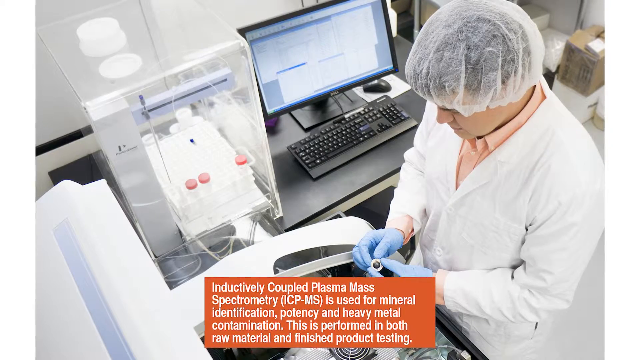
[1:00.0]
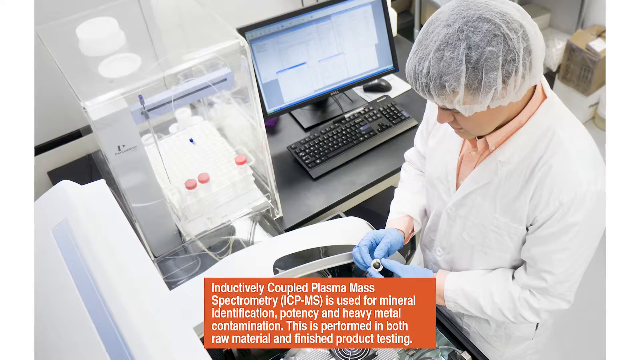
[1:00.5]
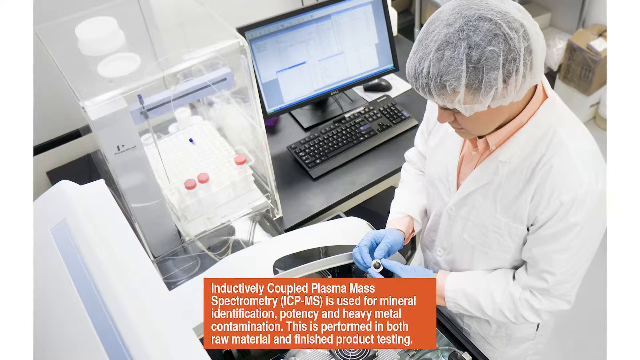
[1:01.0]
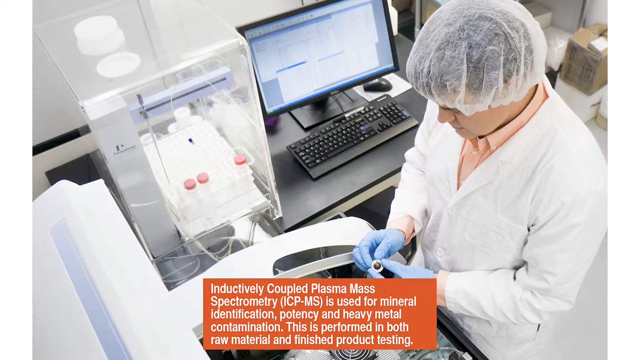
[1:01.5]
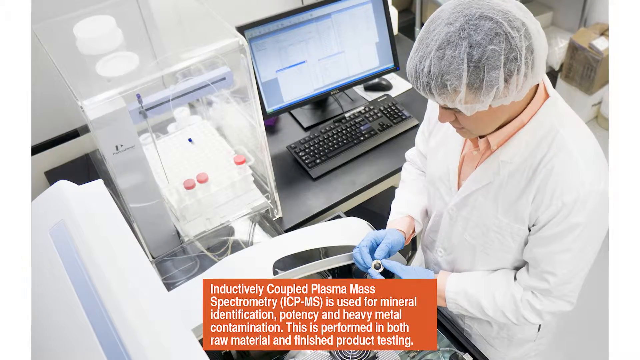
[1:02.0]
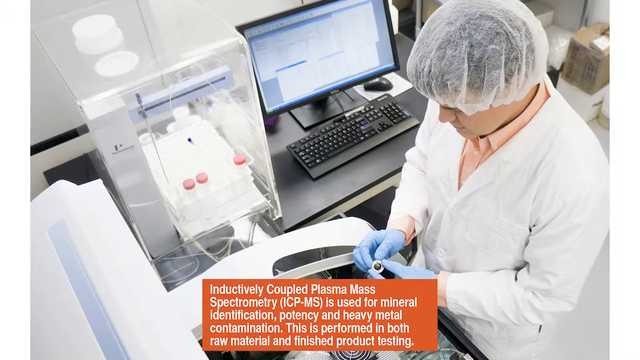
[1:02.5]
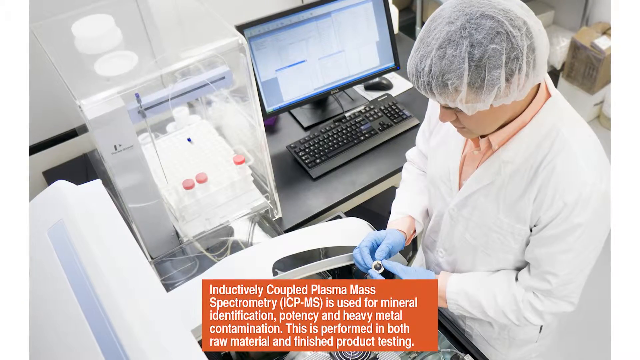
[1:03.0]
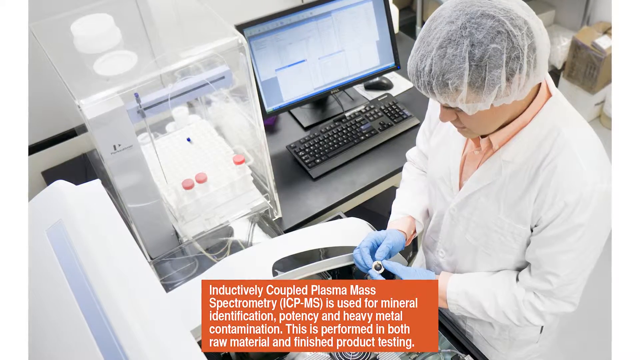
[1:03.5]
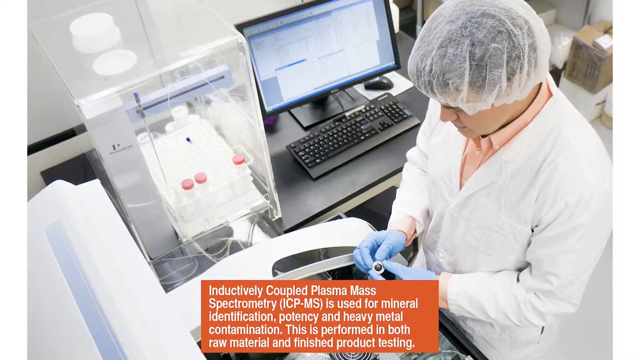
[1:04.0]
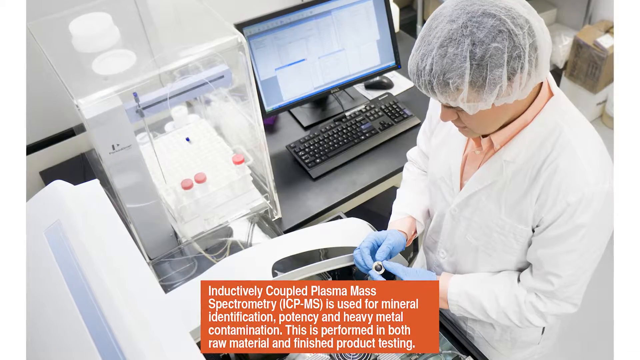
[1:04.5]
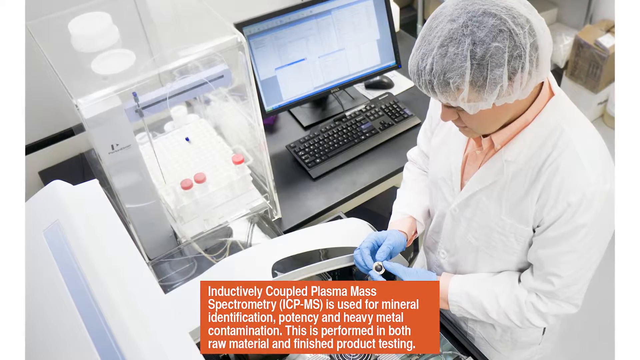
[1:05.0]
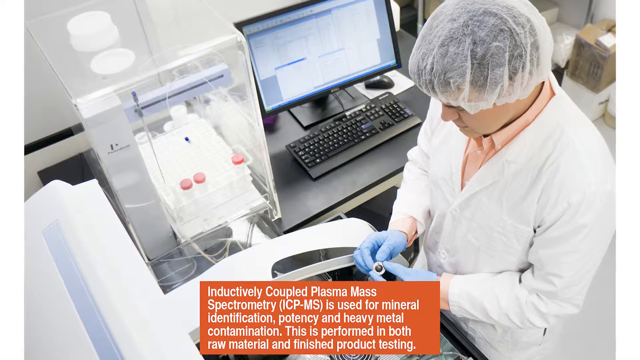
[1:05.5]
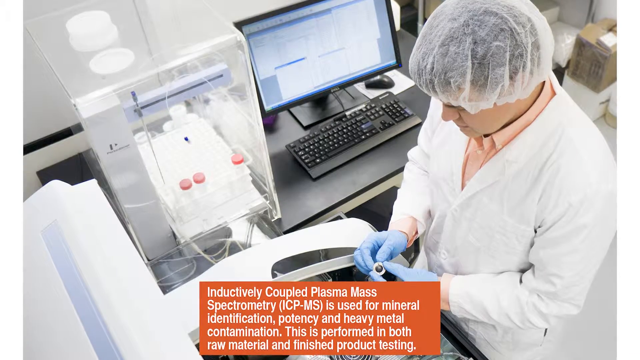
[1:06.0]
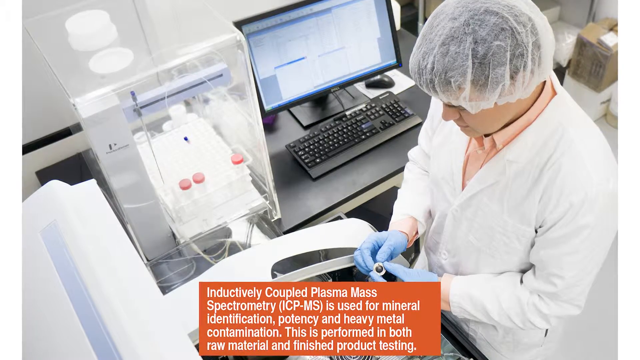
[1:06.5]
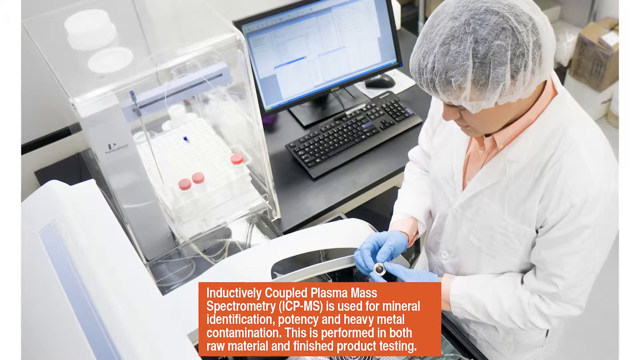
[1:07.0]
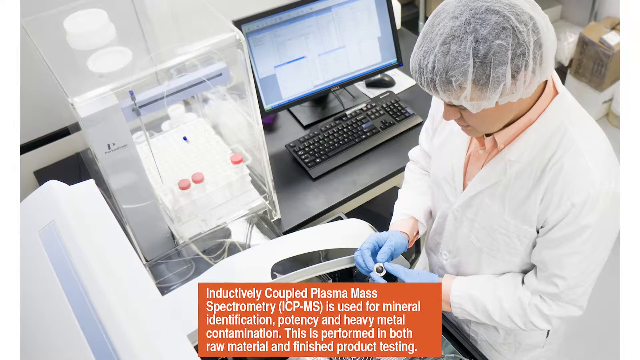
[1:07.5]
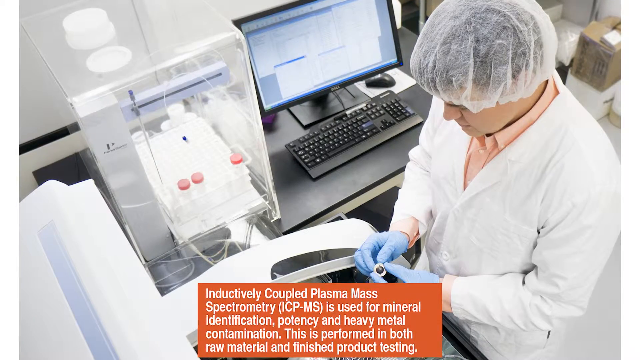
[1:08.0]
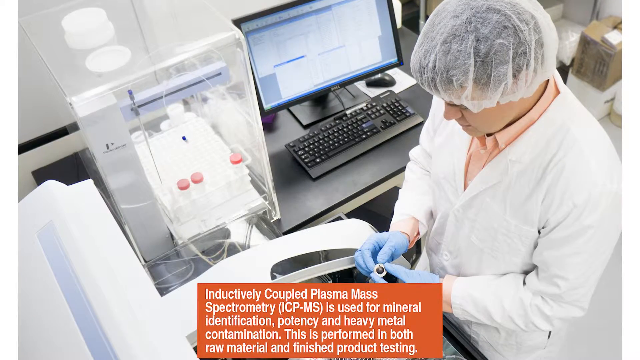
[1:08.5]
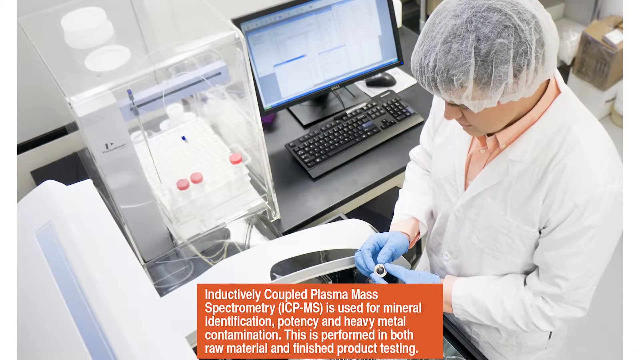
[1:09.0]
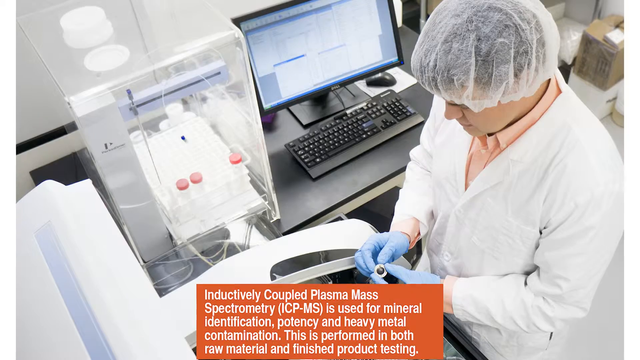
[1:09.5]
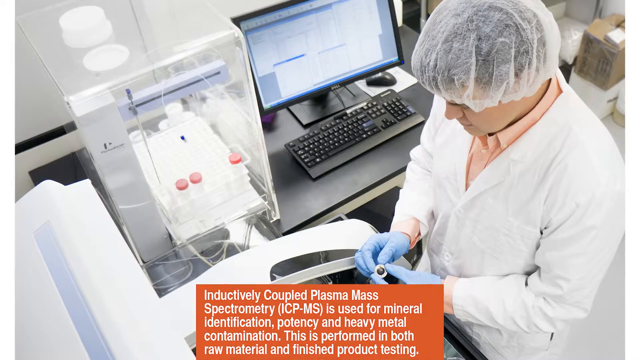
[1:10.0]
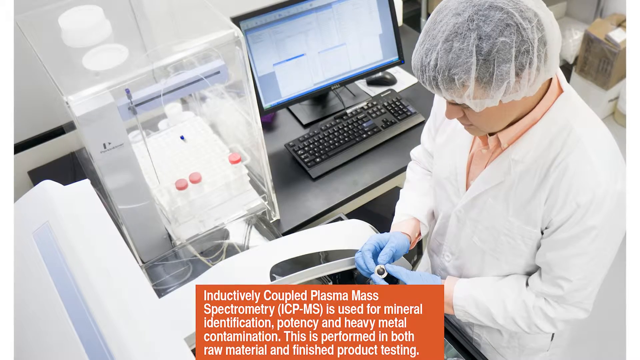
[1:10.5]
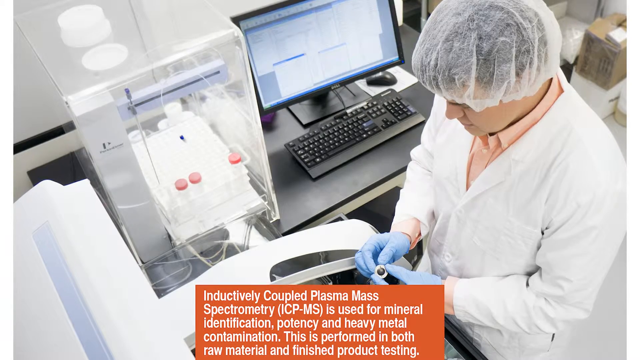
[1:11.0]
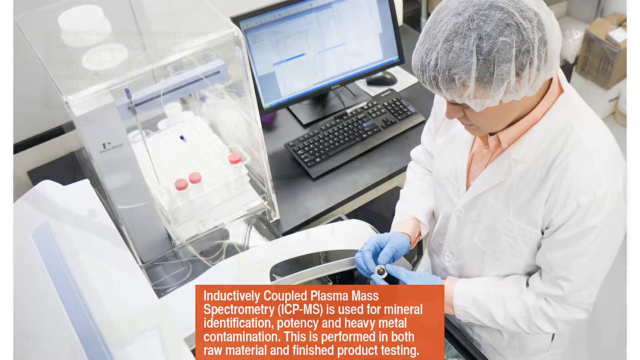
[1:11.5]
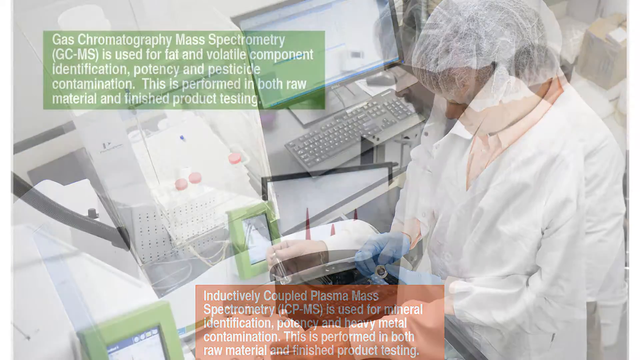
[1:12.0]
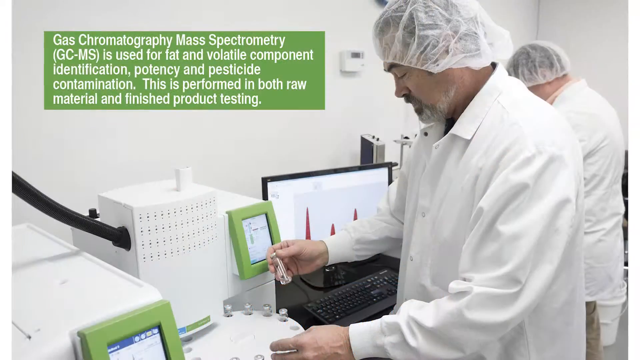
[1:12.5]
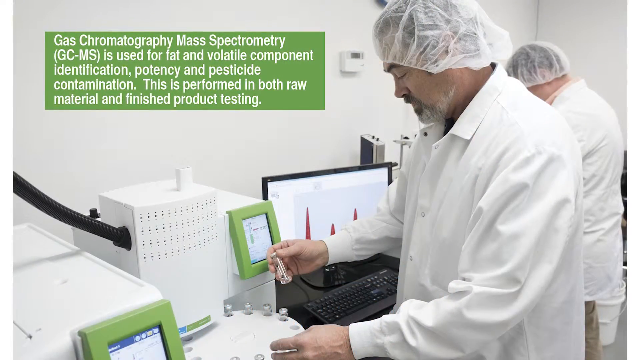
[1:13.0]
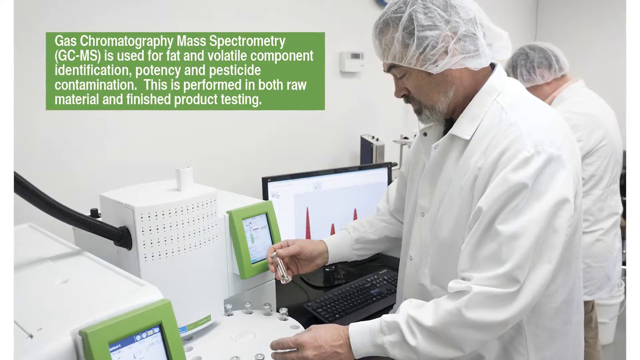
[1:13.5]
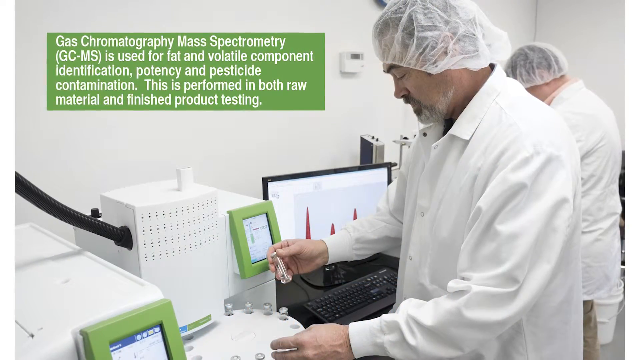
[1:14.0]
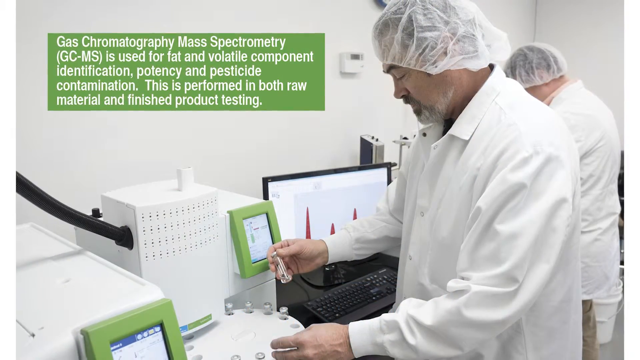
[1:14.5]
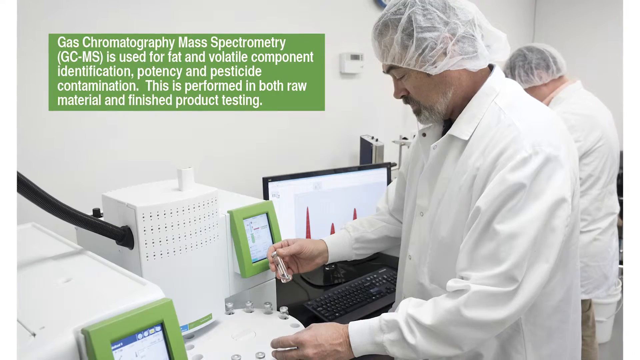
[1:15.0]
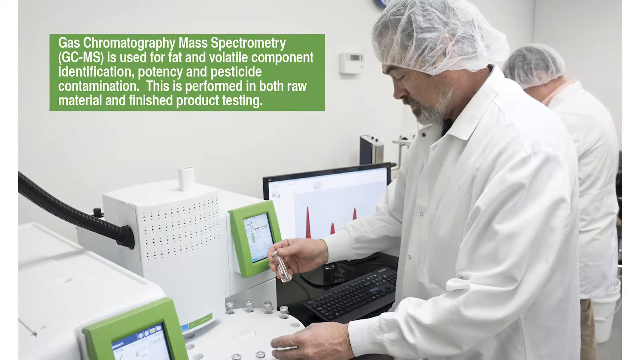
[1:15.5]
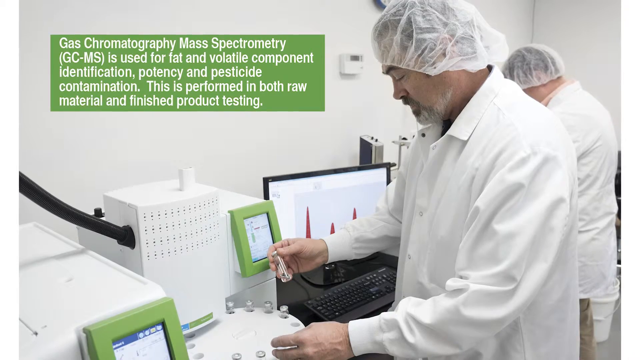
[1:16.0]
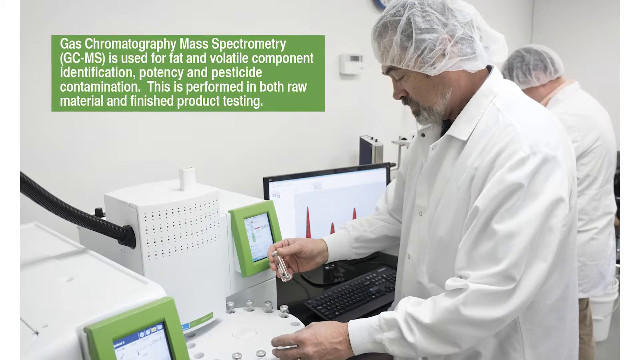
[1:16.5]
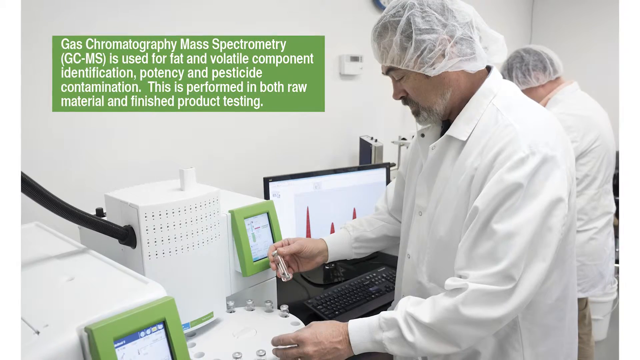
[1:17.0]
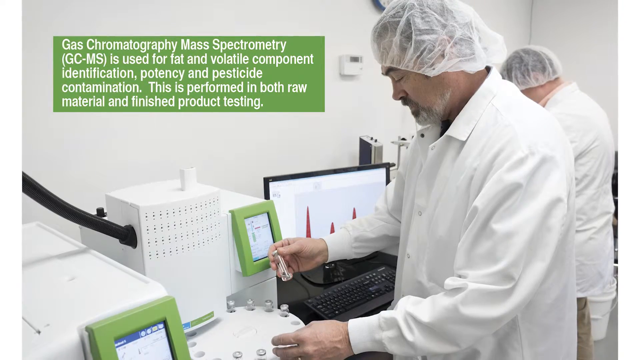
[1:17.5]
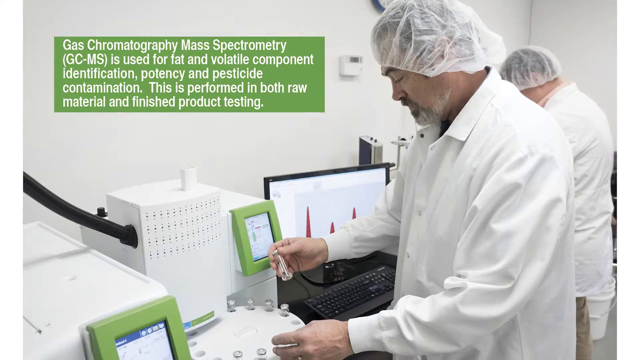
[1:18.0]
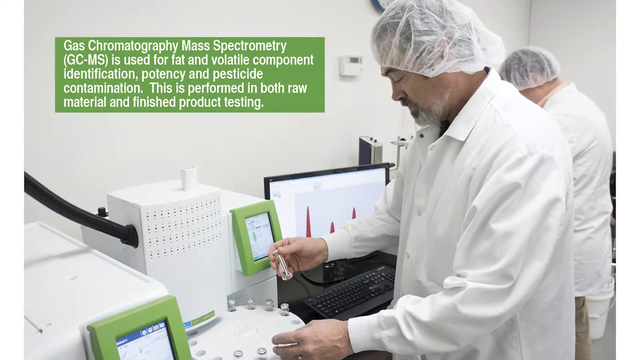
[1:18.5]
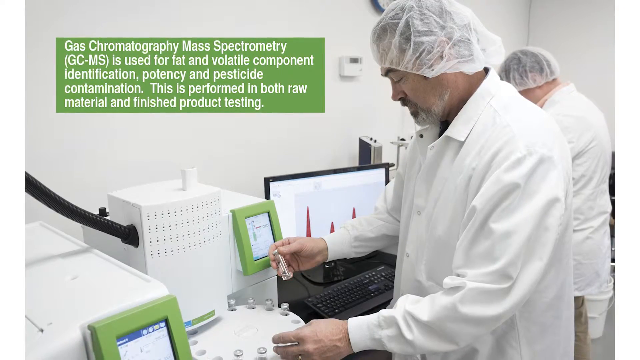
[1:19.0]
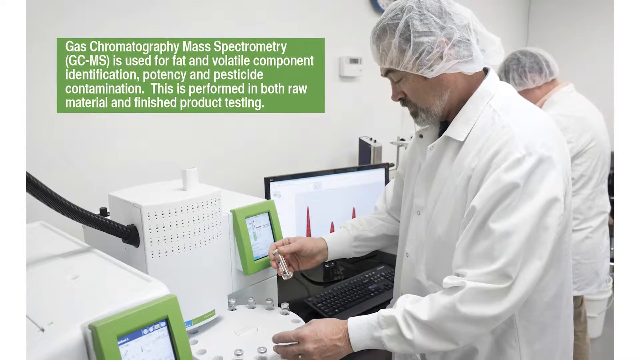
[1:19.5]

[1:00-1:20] A still photograph shows a man working in a lab, taken from above looking down on him. He wears a white lab coat over a peachy pink top, a white hairnet, and blue rubber gloves on both hands, which are grasping a little piece of metal. To his right is a computer, and there is other technical-looking equipment in the room. A little orange box contains text describing some type of spectrometry. After the picture lingers for many seconds, it changes to a different image of a different room in a lab, where two men in white lab coats and white hairnets are visible. The man nearest the camera stands in profile, looking down at a vial he holds in his right hand, while his left hand rests on a circular machine holding other vials.